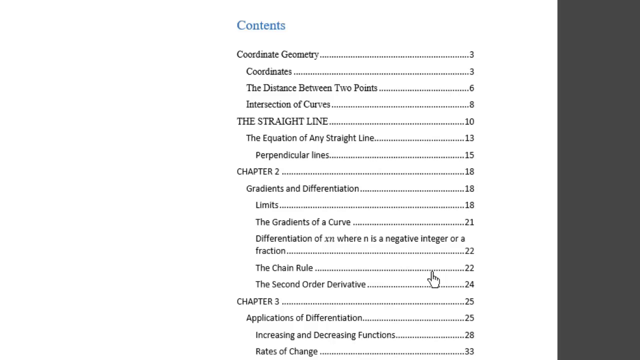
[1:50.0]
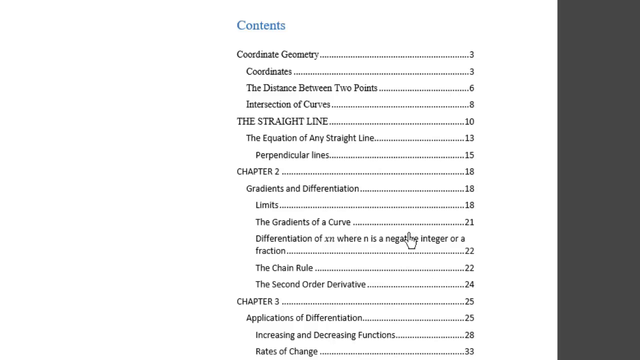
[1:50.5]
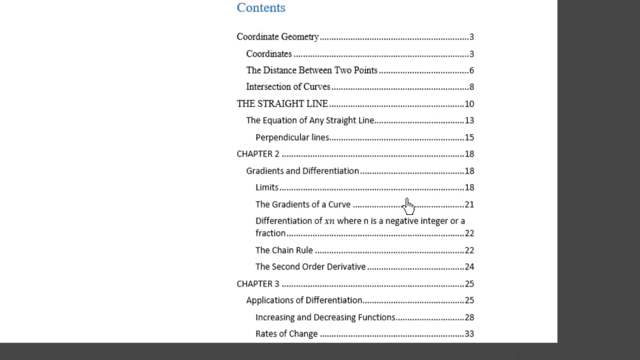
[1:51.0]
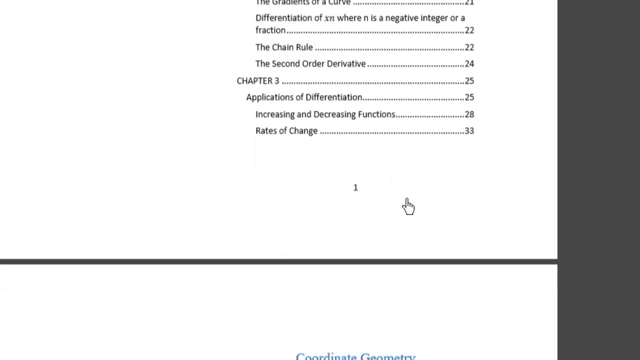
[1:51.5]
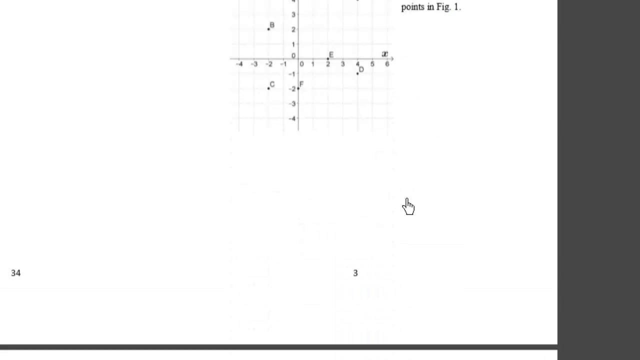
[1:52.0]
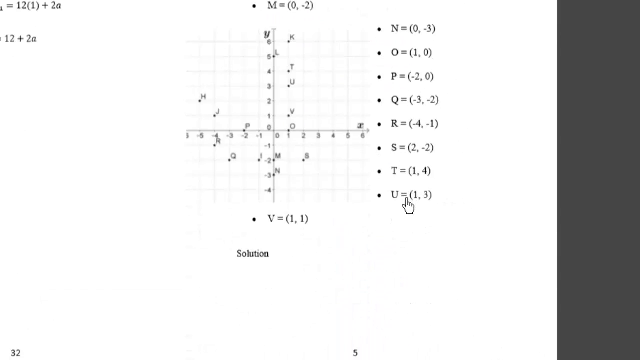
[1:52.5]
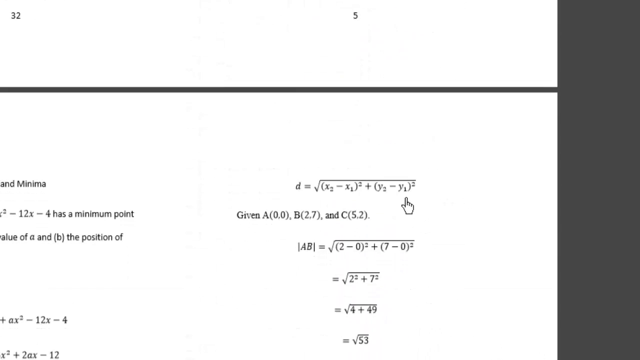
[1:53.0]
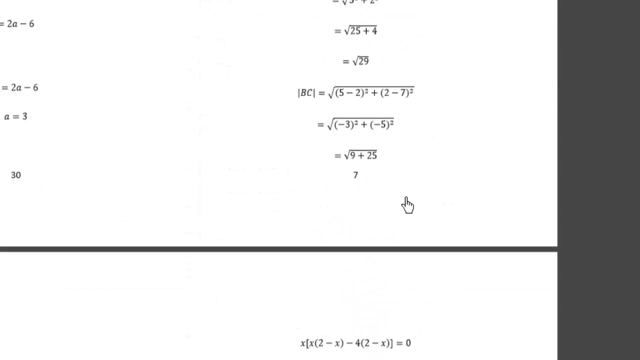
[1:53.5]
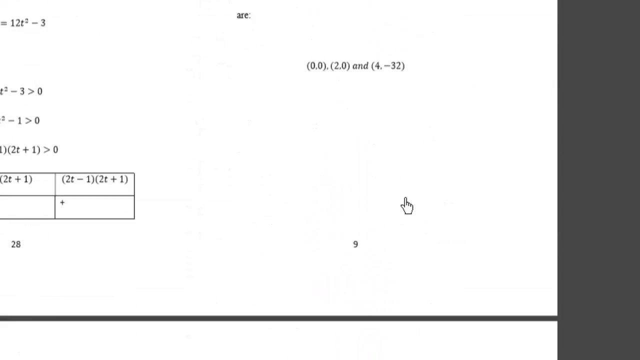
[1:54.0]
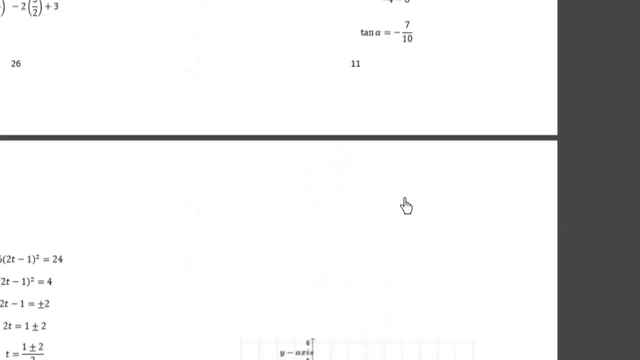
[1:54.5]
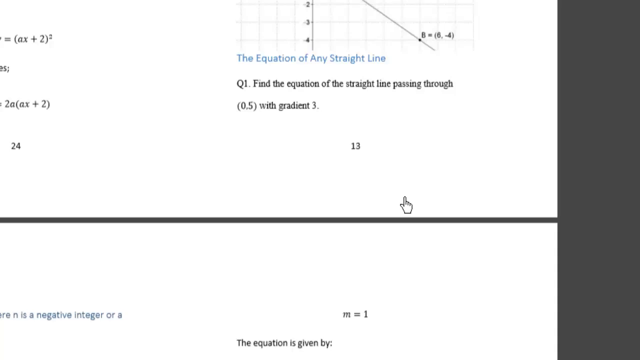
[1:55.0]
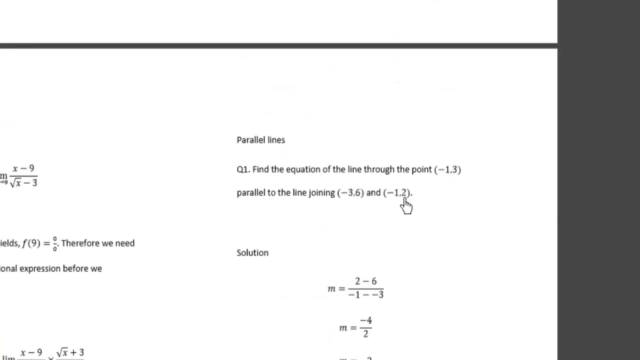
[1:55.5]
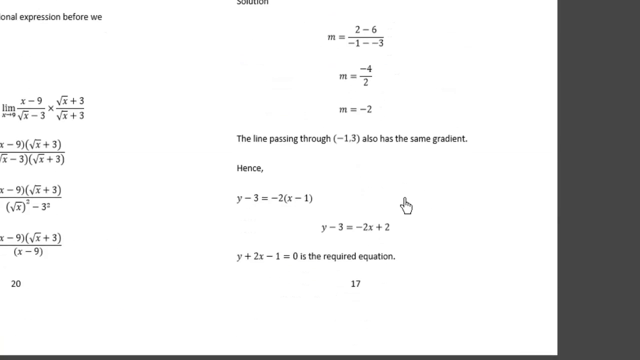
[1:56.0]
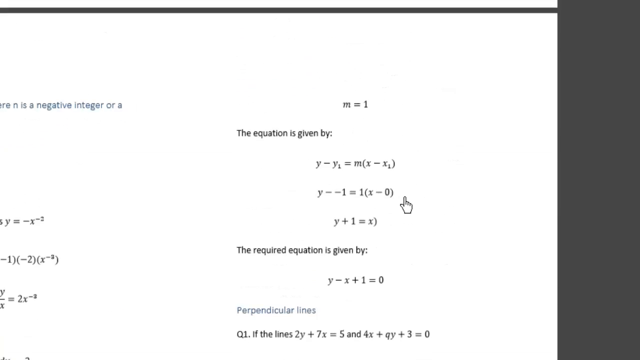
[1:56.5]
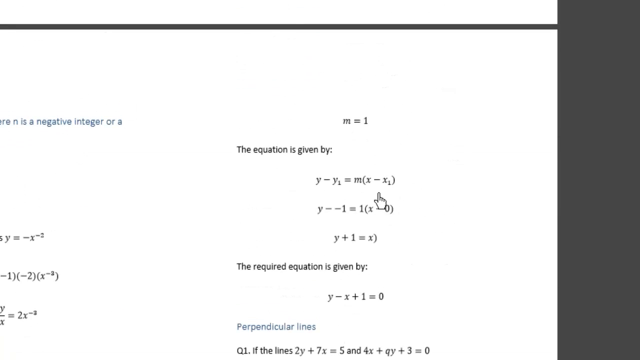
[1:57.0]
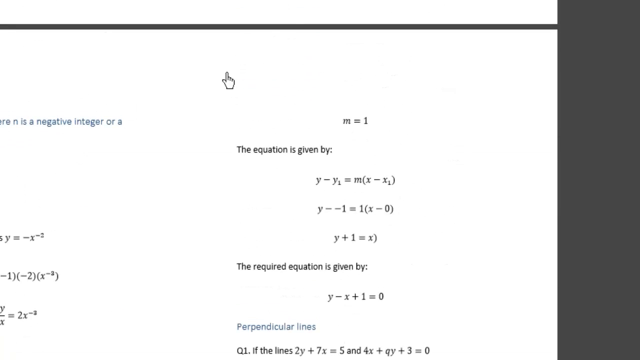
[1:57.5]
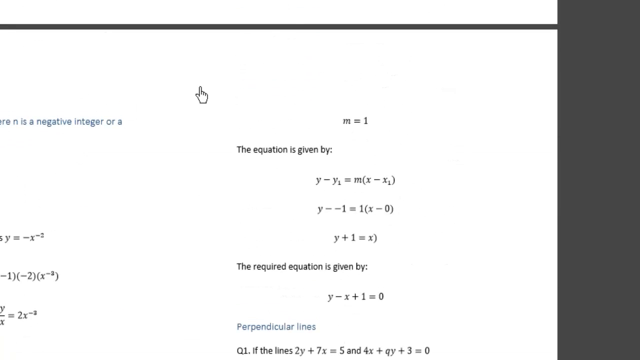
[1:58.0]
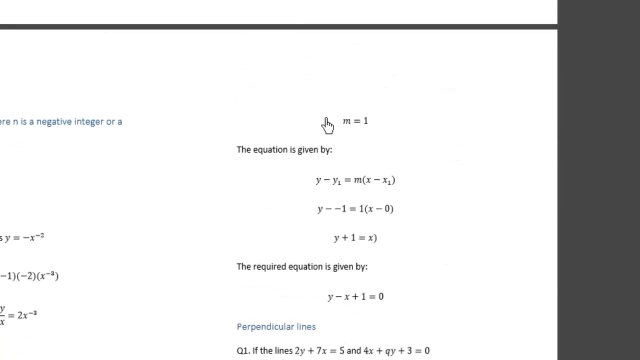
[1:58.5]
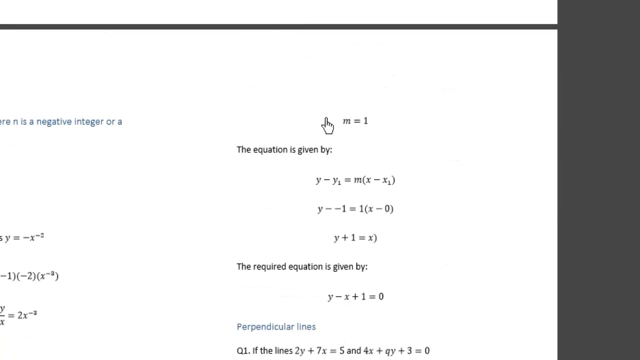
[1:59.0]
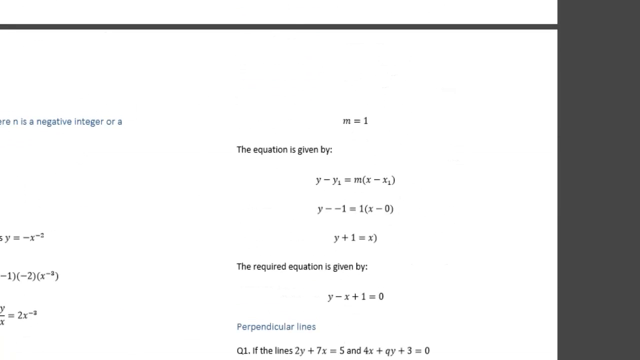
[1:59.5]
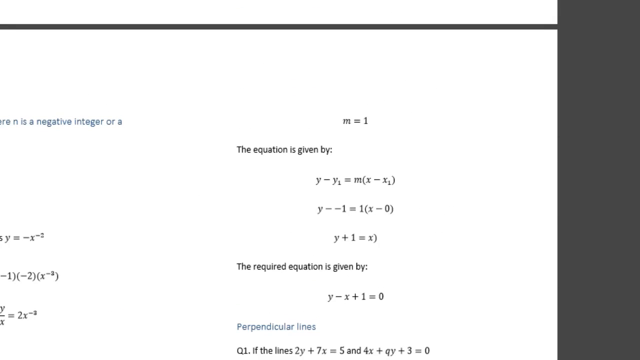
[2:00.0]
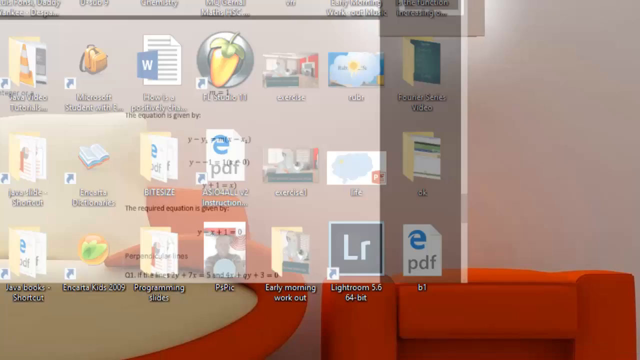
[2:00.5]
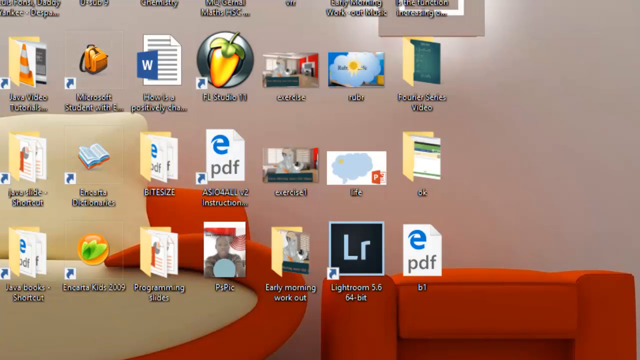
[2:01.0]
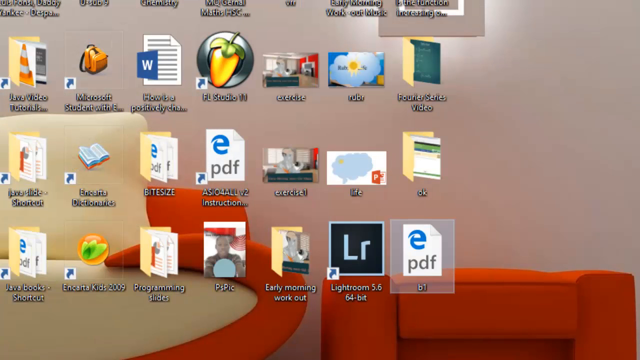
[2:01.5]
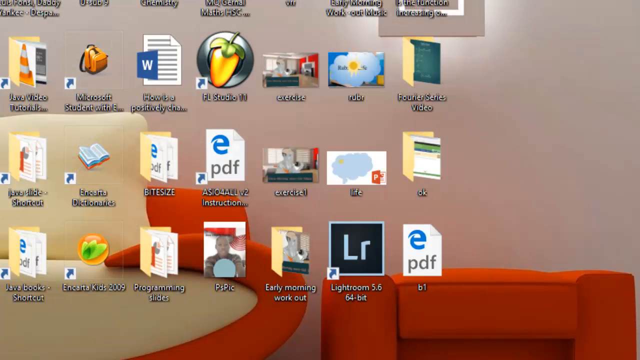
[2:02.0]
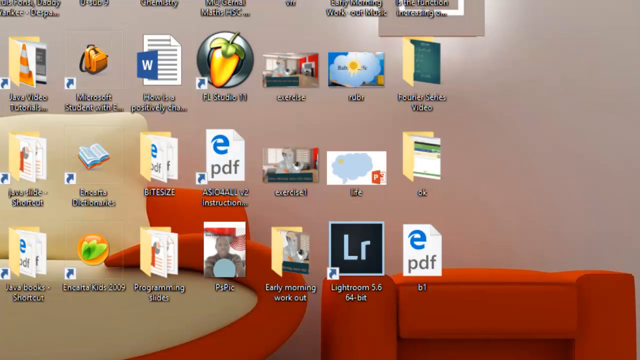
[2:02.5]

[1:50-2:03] Someone films their computer in Microsoft Word. The mouse cursor is a white right human hand with a pointing finger. A document with several pages is being scrolled through; the bar on the right goes down and the pages scroll up. The mouse is stable during the first few page scrolls, then after about six or seven pages it kind of moves up and down, and the document disappears altogether. The computer desktop appears, with a lot of different icons on it, and a Microsoft Explorer PDF called "B1" is highlighted.